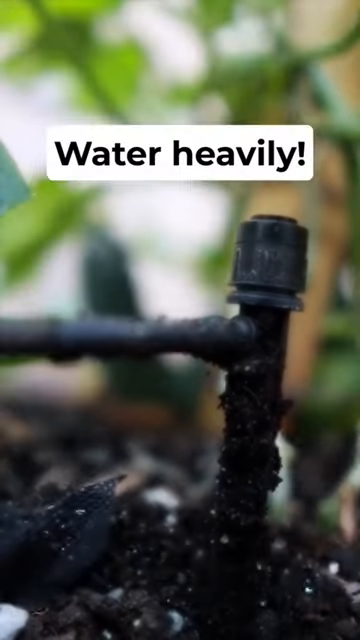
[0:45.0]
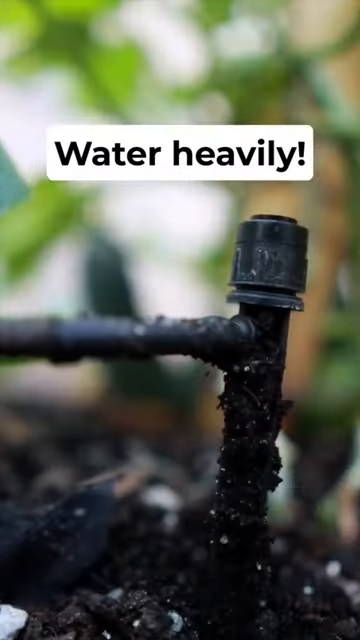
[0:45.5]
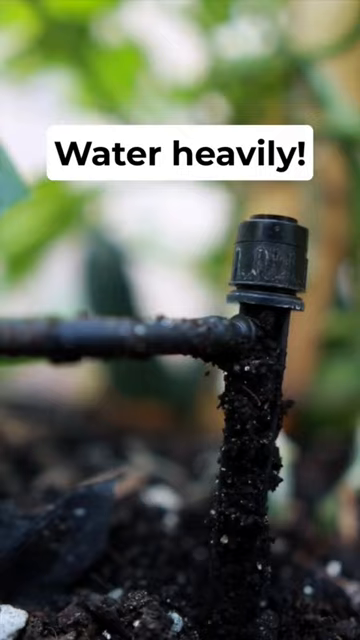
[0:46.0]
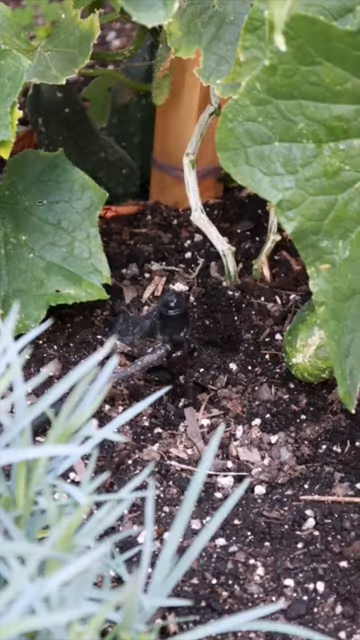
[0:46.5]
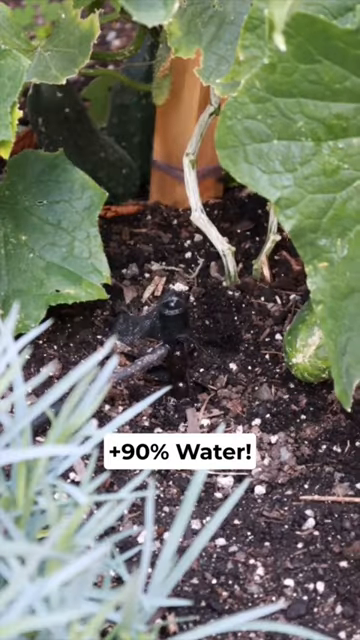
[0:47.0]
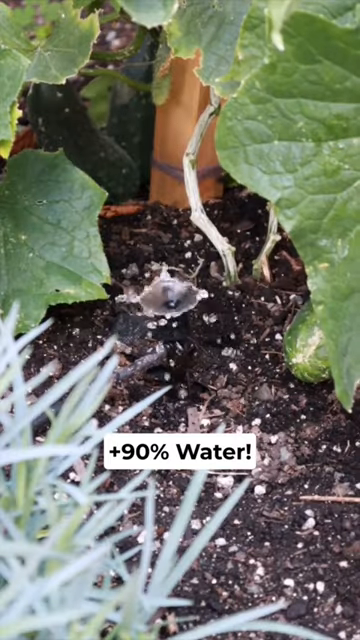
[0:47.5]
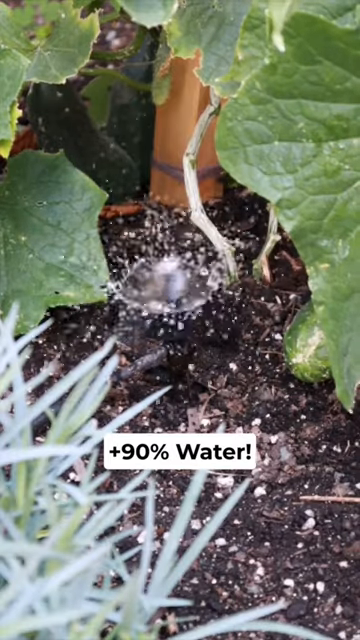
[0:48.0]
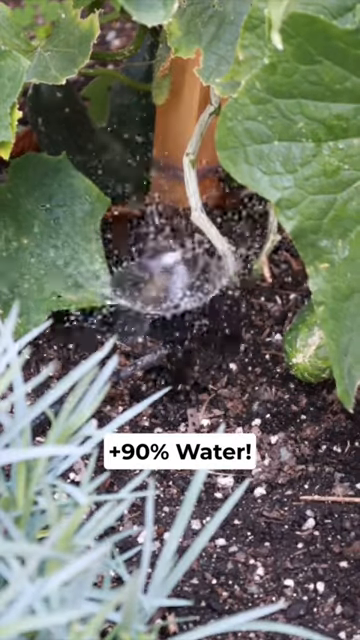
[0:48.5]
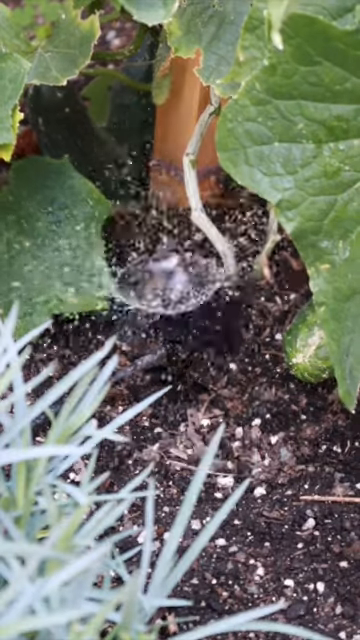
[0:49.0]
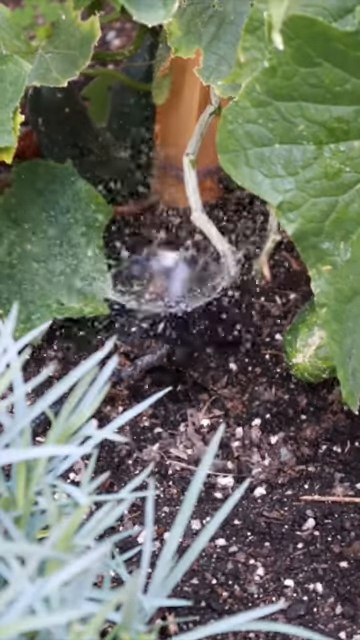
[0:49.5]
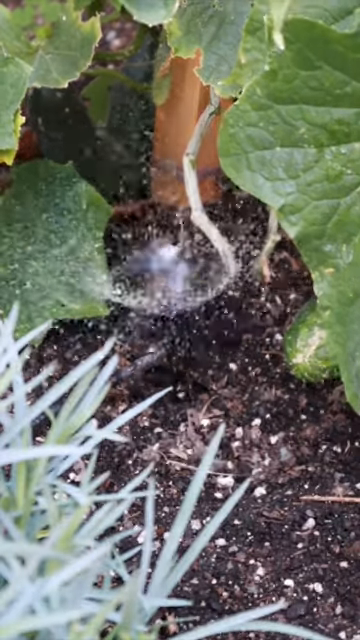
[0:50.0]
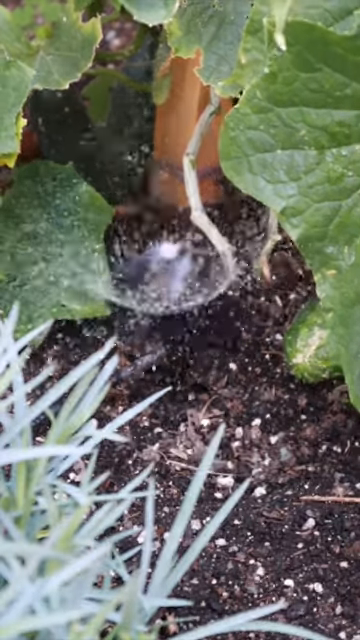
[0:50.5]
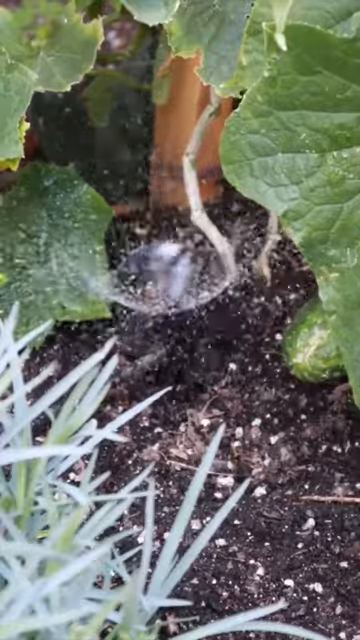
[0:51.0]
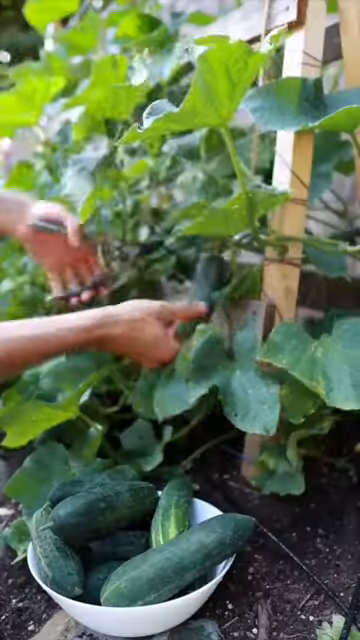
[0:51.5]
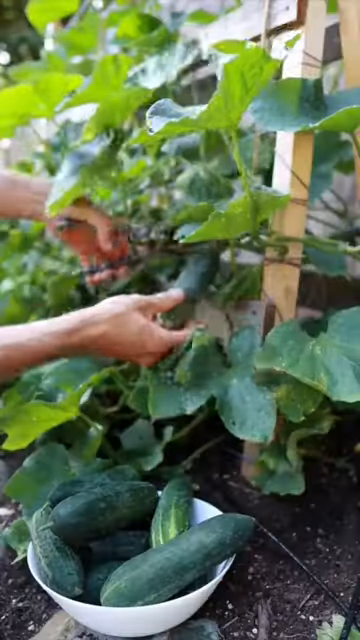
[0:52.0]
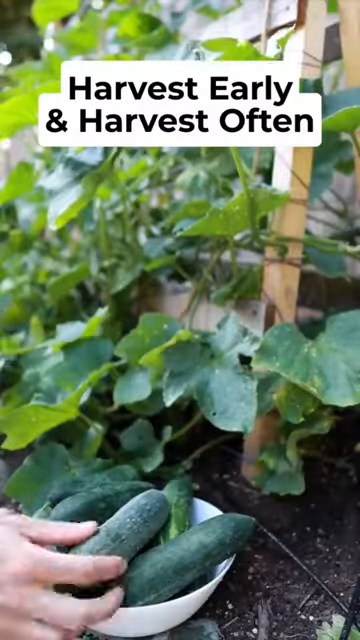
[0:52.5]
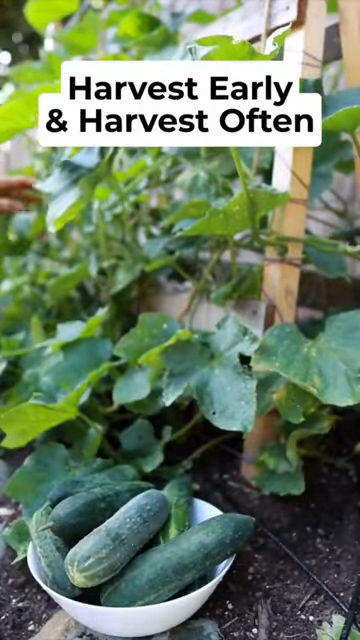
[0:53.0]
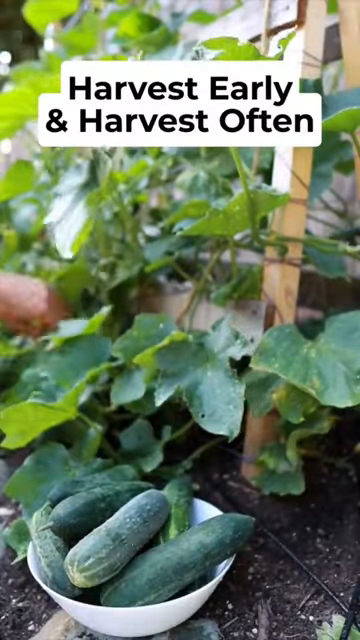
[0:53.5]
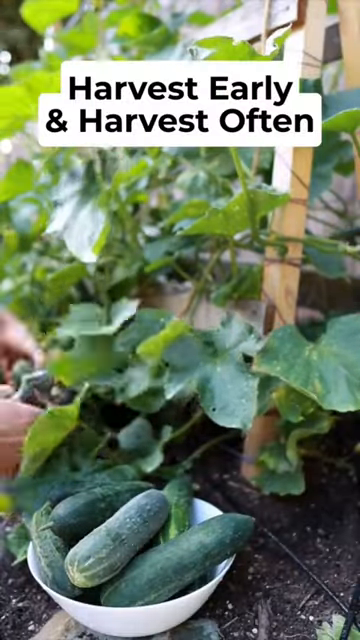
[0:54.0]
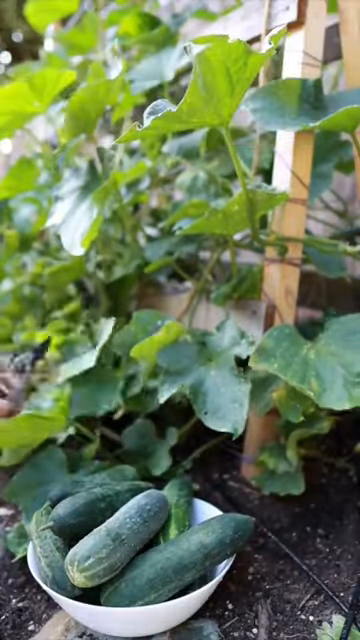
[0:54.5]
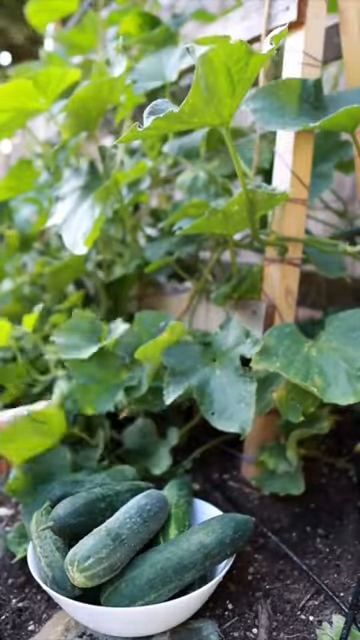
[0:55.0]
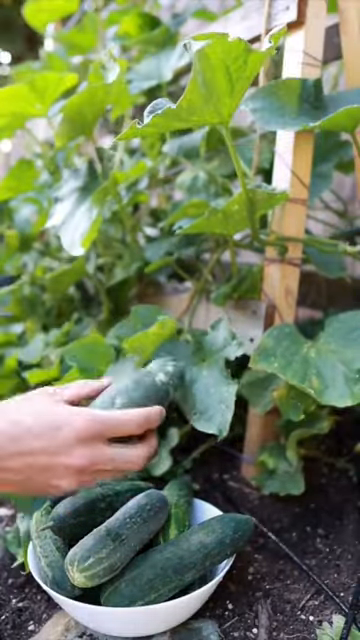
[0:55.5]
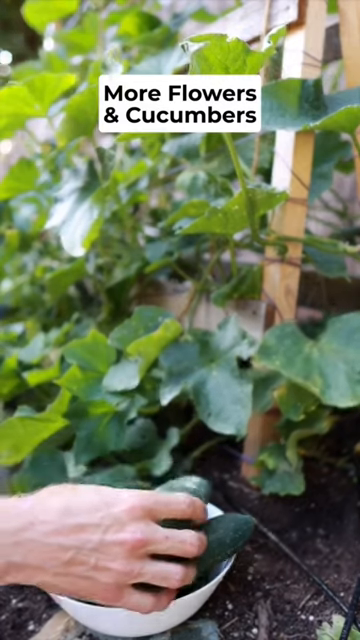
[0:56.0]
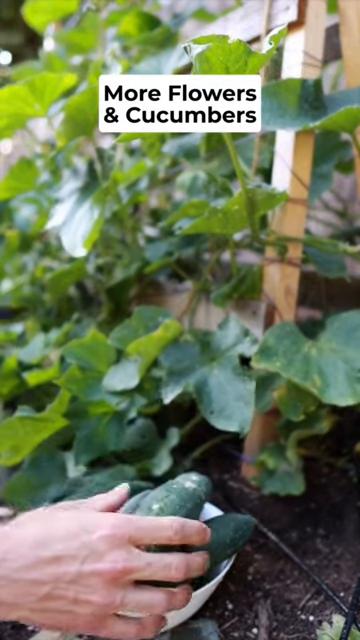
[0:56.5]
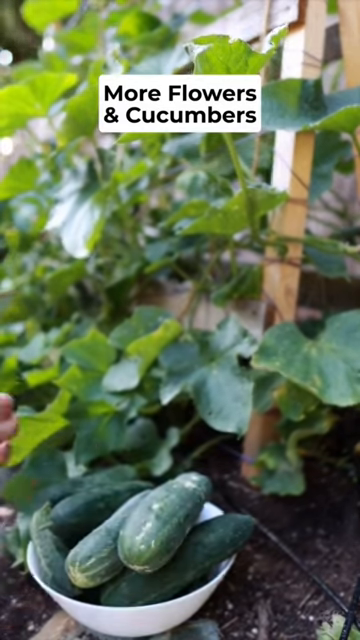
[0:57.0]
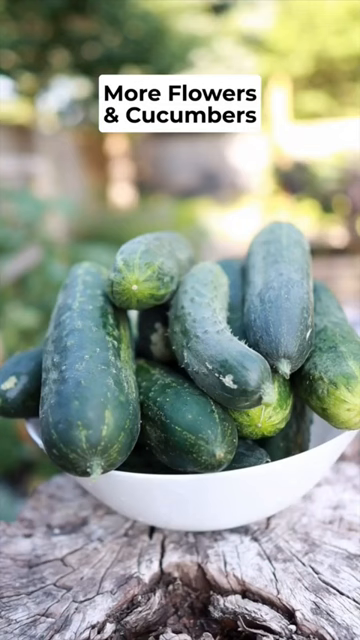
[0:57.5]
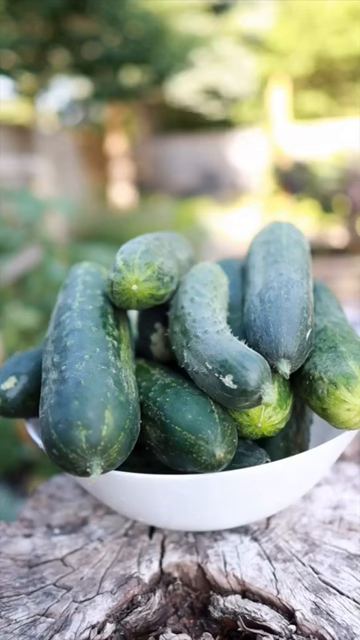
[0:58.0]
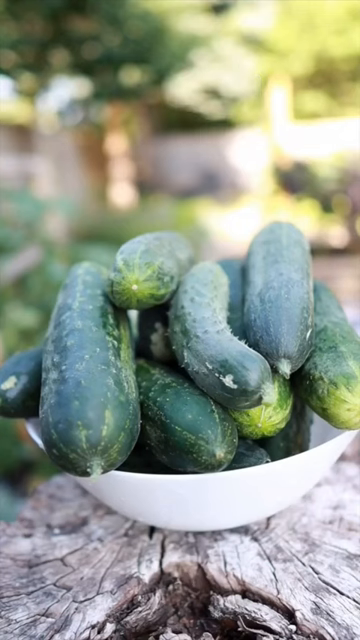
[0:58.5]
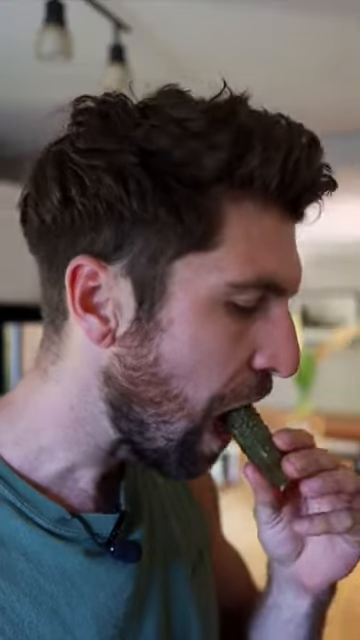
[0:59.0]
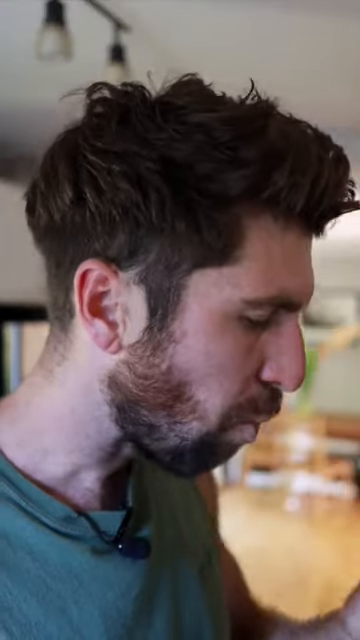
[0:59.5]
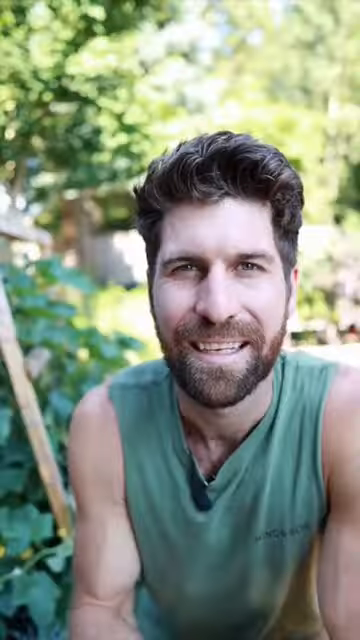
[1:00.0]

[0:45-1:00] The soil is watered rather than the leaves. The plants have a lot of green foliage and are growing upright. Food is sprinkled on the top of the soil.